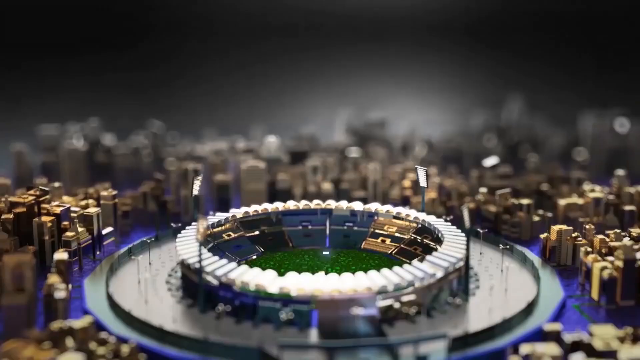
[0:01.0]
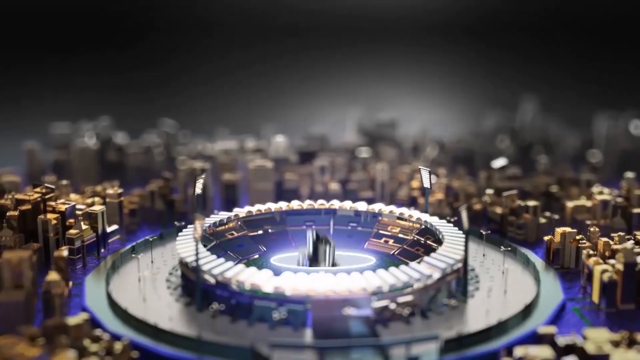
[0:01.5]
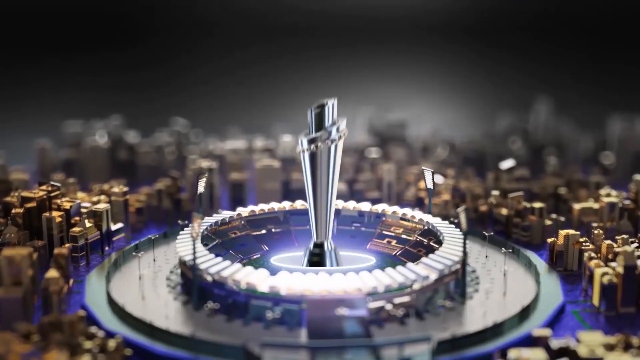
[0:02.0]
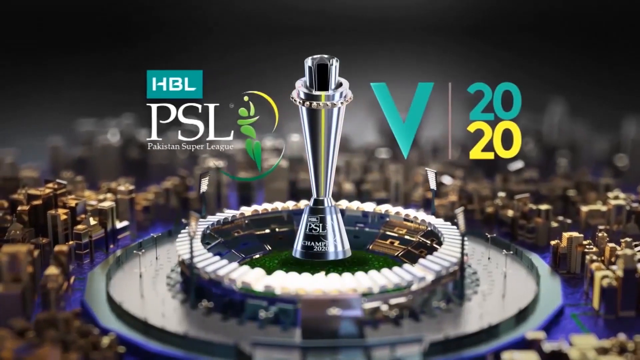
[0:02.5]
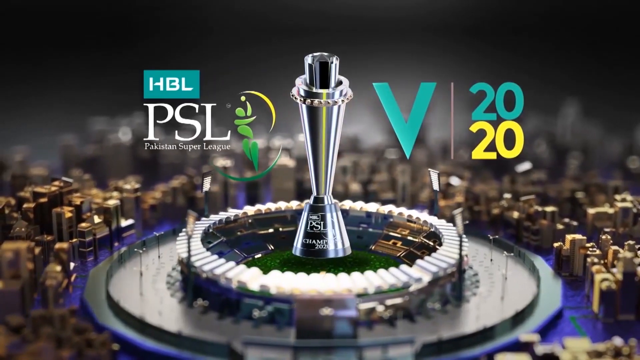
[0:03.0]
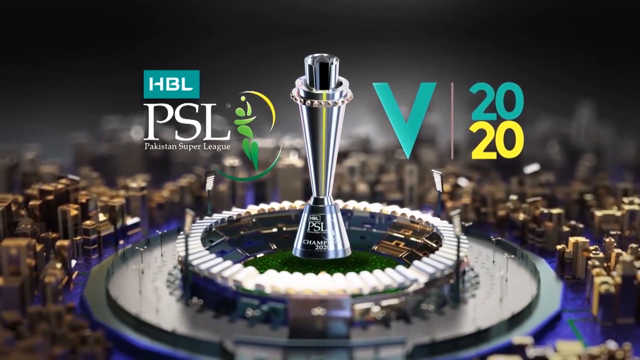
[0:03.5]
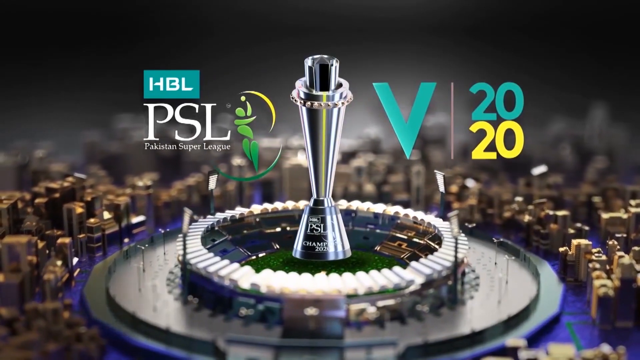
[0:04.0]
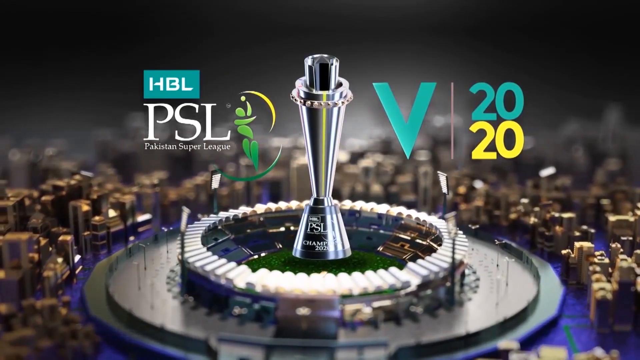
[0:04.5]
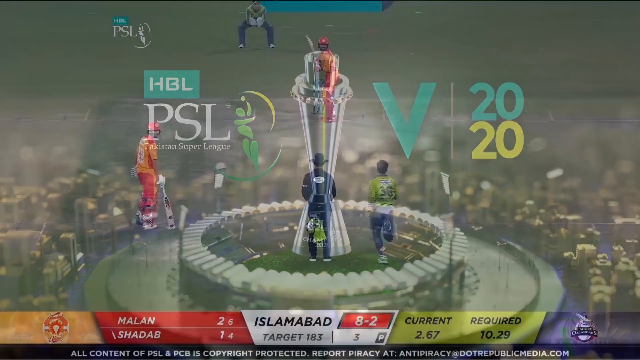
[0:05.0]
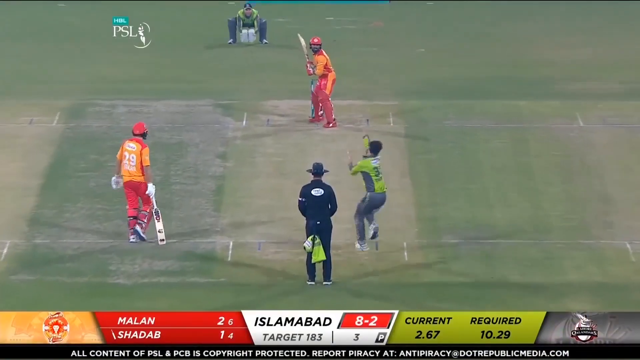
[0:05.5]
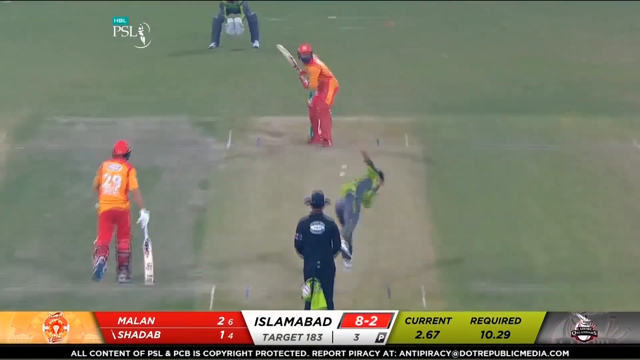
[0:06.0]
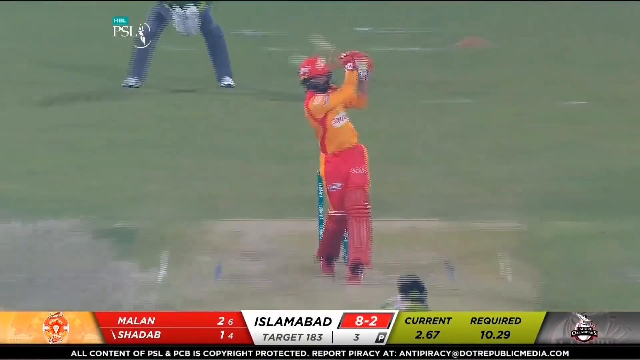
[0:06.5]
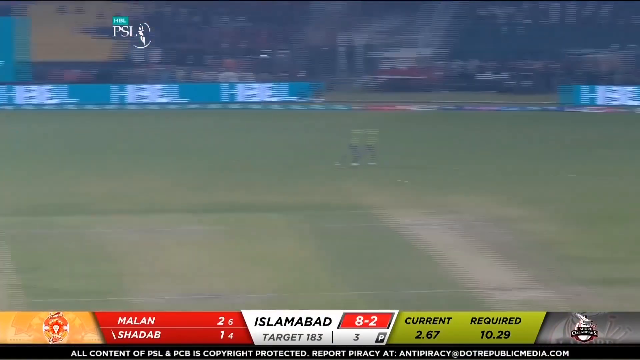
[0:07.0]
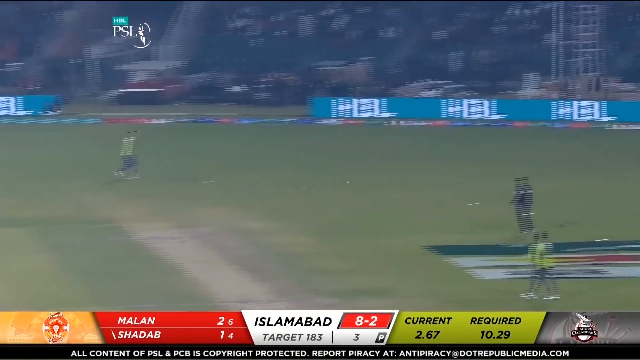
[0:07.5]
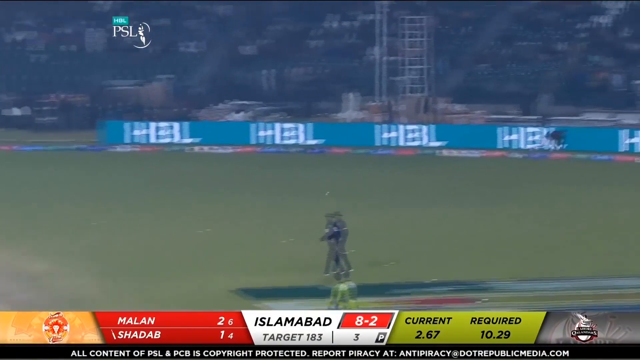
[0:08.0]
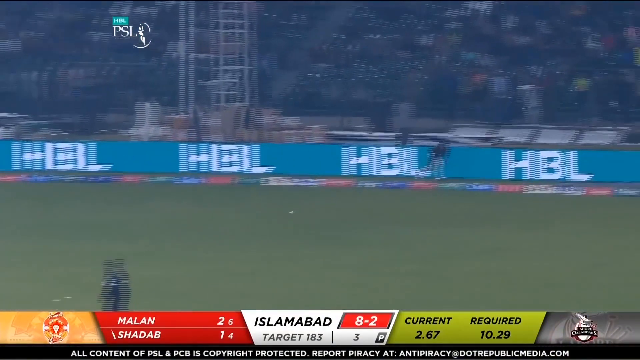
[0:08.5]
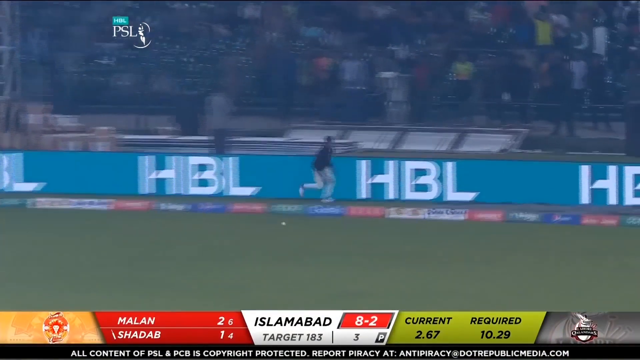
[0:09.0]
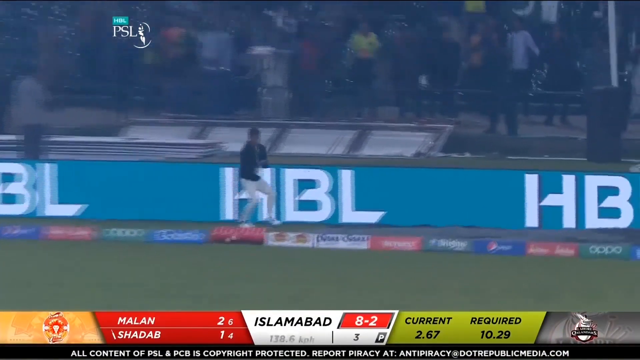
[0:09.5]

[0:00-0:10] The video covers the Pakistan Super League 20/20 cricket competition, sponsored by HBL. The first graphic shows a cricket stadium with a city around it and the championship trophy in the centre of the screen; the trophy is silver, has an inscribed base, and is tapered in the middle. The screen rotates, then moves away from the logo to the cricket match itself, played on what looks like a fairly dry grass surface. Islamabad are batting and are trying to score 183 runs to win, which would require 10 runs per over; they are currently scoring only 2.67 runs an over.